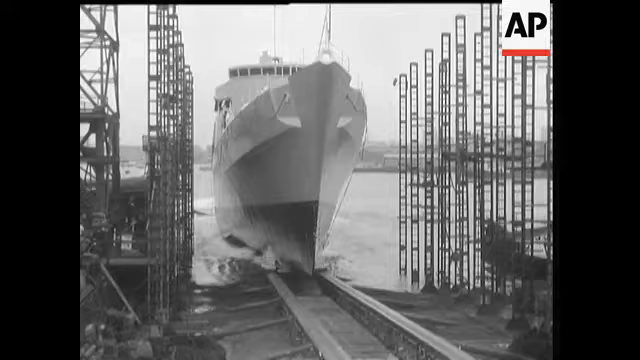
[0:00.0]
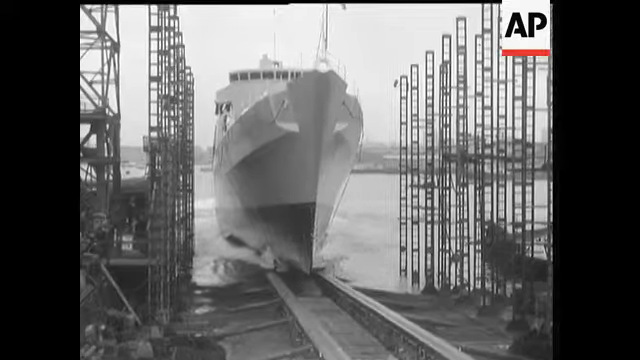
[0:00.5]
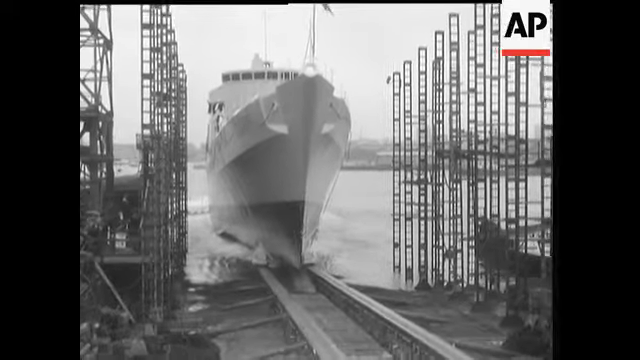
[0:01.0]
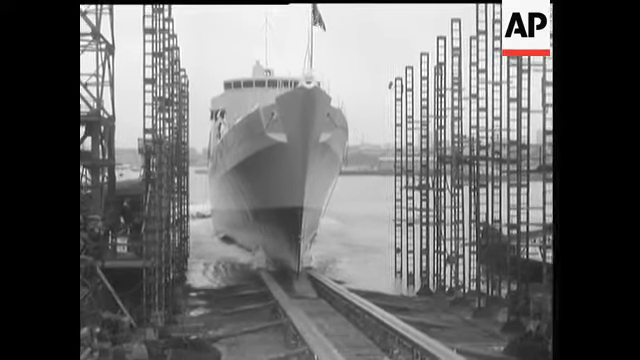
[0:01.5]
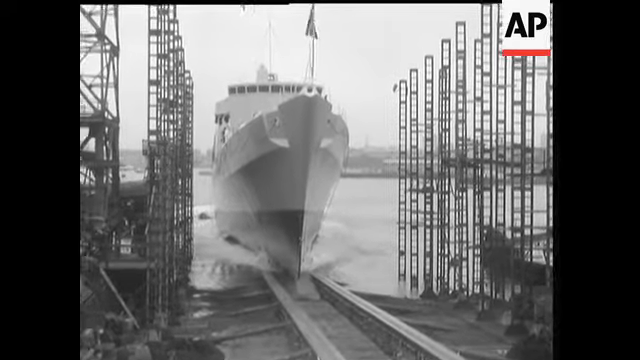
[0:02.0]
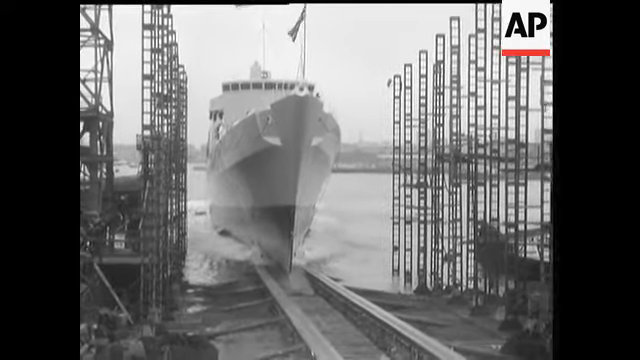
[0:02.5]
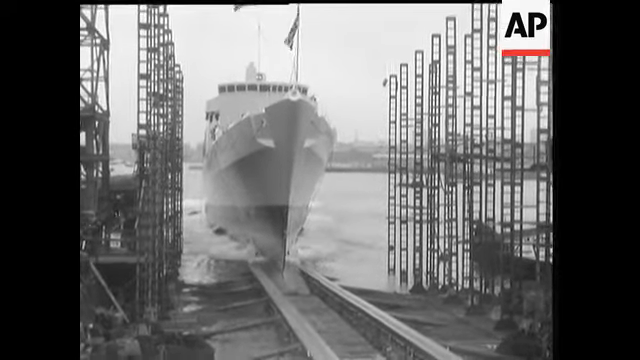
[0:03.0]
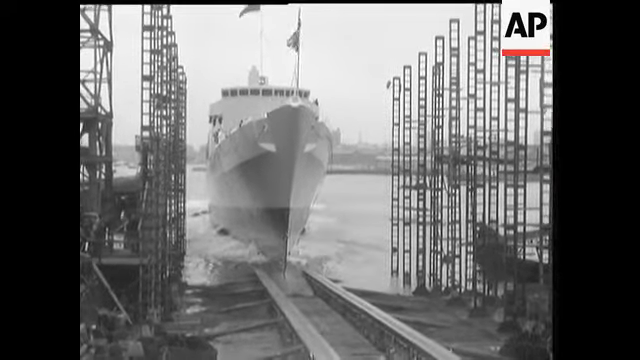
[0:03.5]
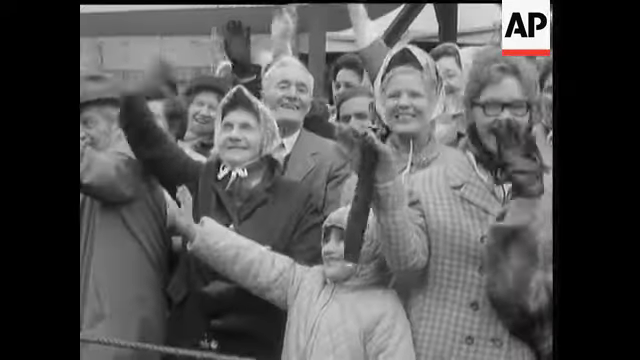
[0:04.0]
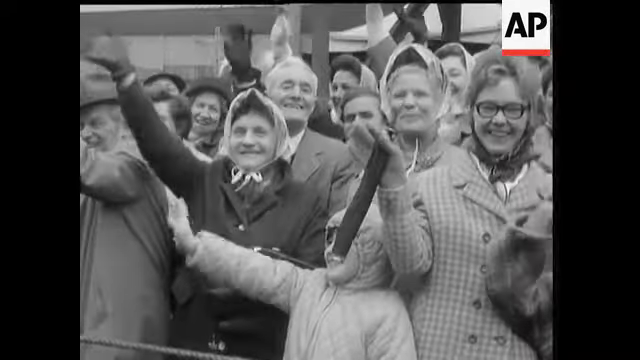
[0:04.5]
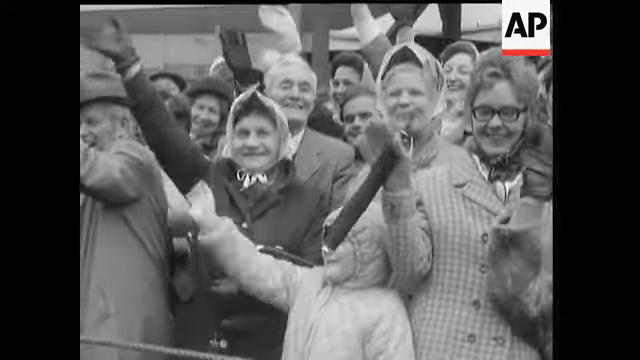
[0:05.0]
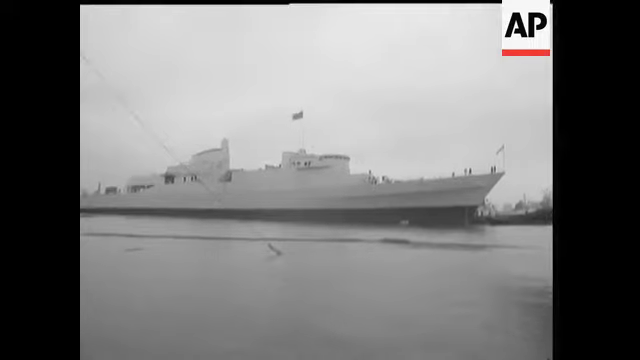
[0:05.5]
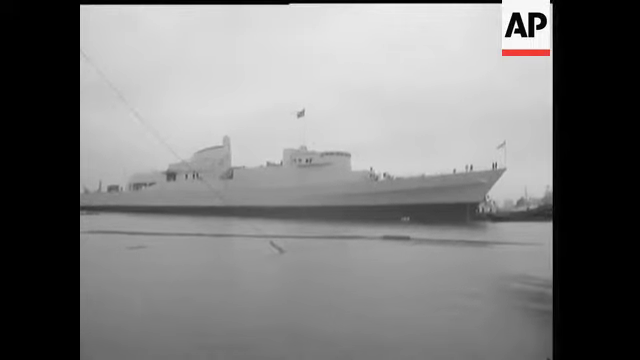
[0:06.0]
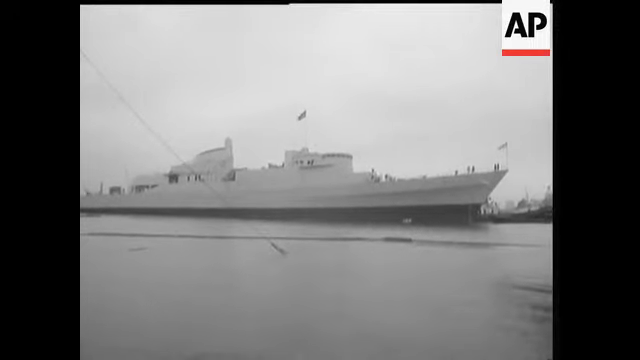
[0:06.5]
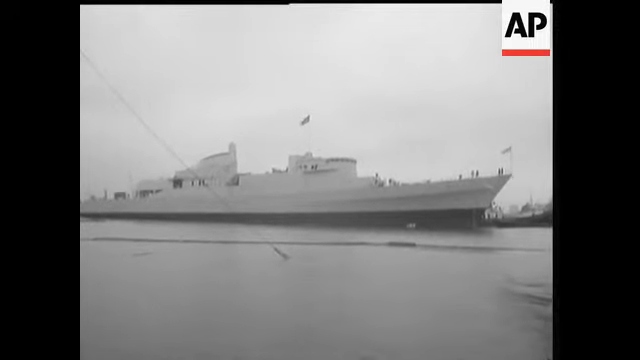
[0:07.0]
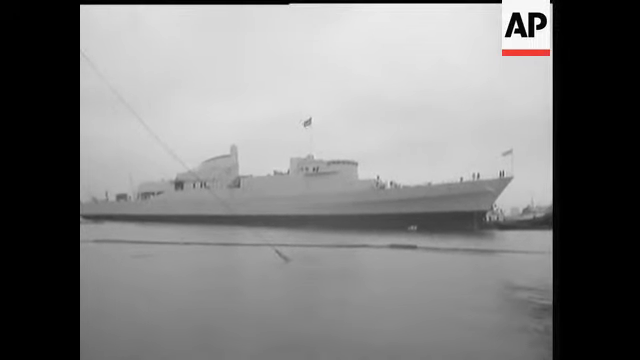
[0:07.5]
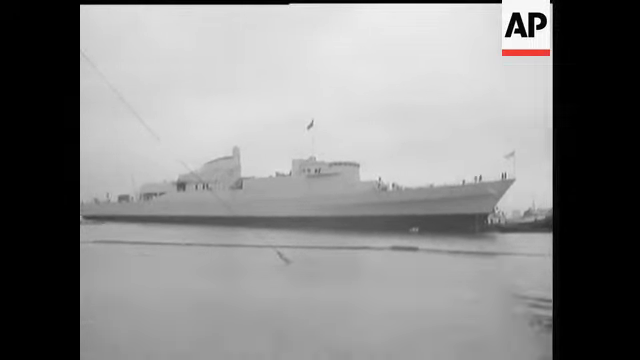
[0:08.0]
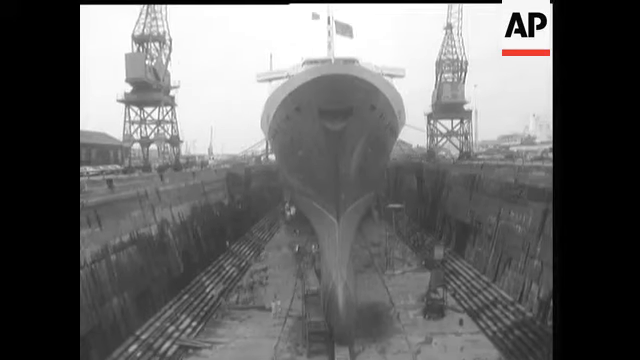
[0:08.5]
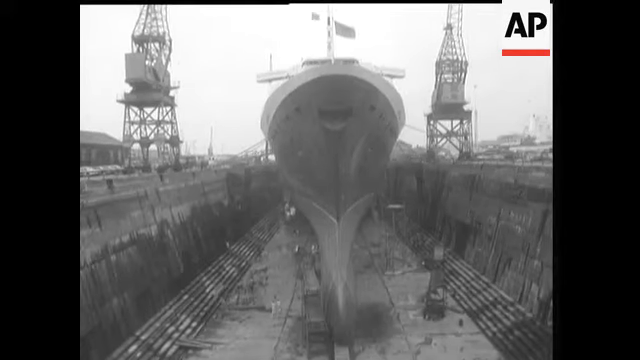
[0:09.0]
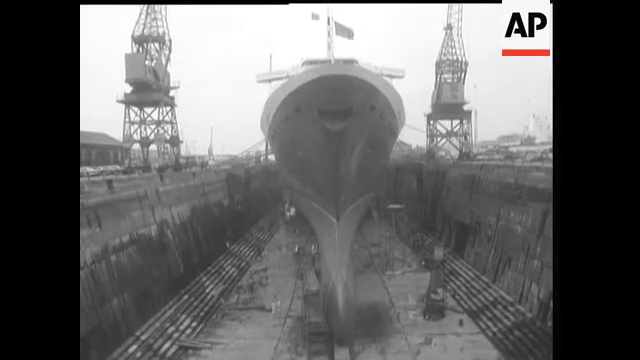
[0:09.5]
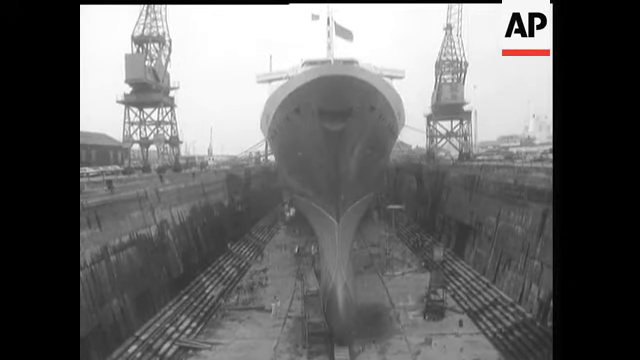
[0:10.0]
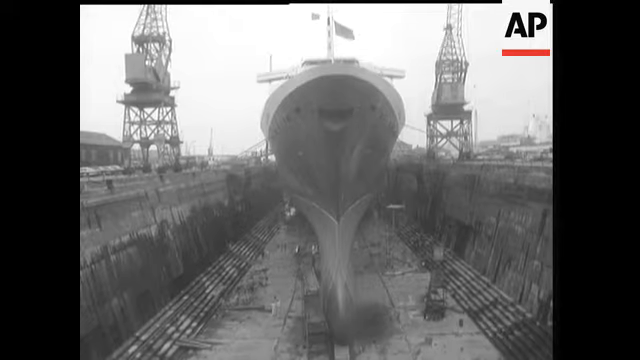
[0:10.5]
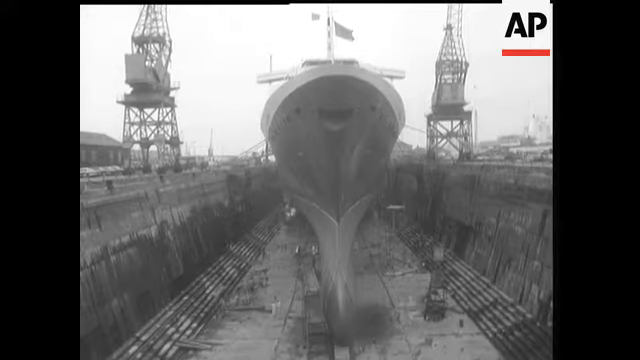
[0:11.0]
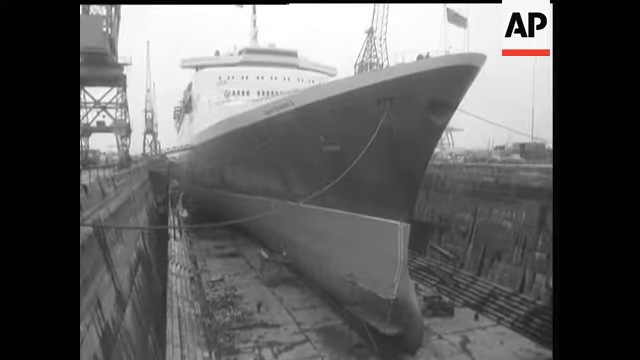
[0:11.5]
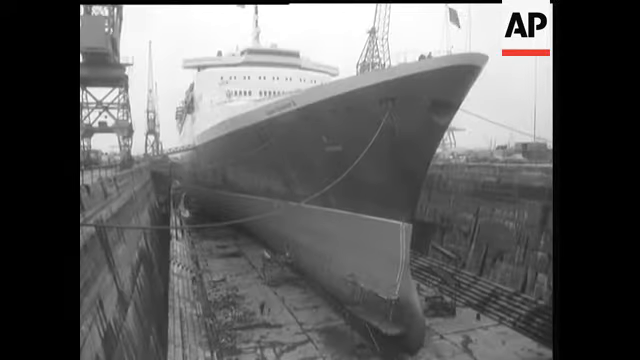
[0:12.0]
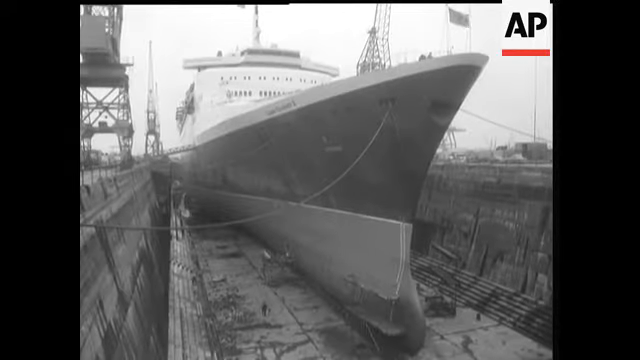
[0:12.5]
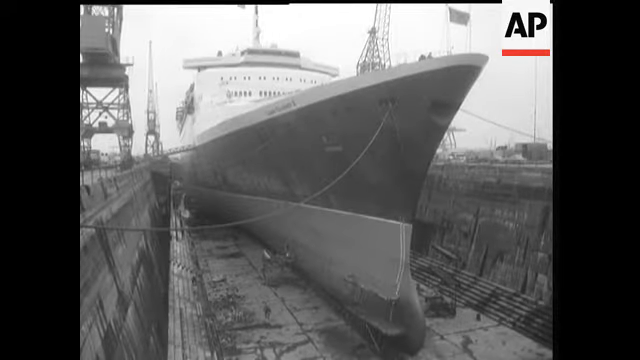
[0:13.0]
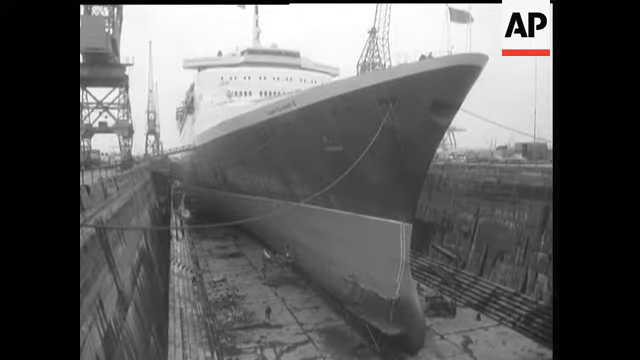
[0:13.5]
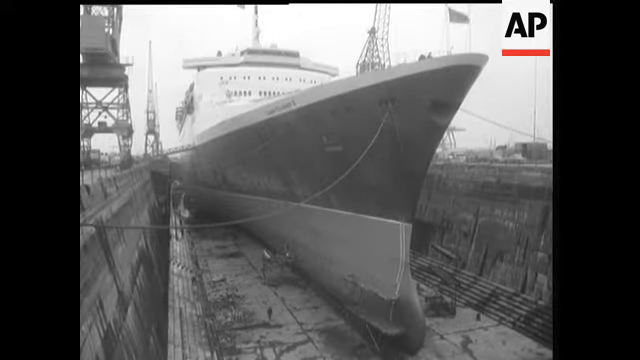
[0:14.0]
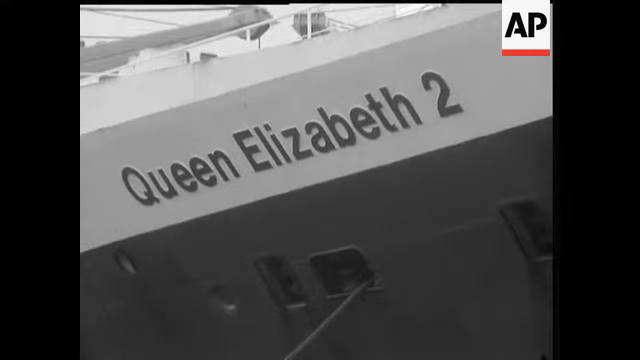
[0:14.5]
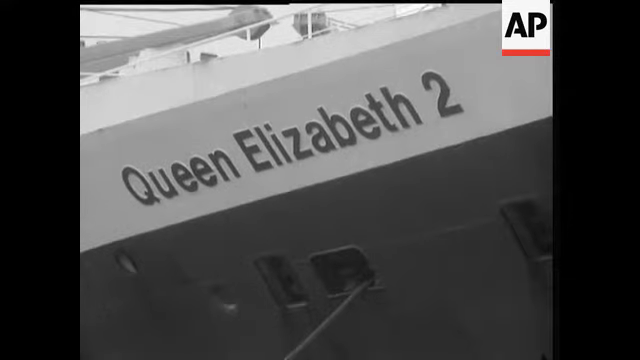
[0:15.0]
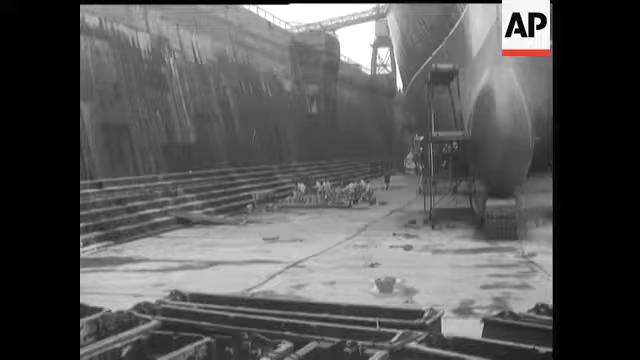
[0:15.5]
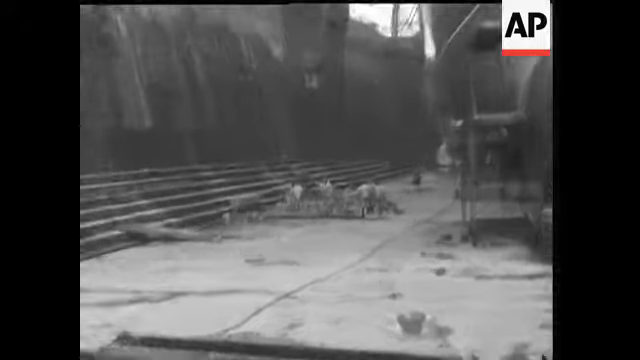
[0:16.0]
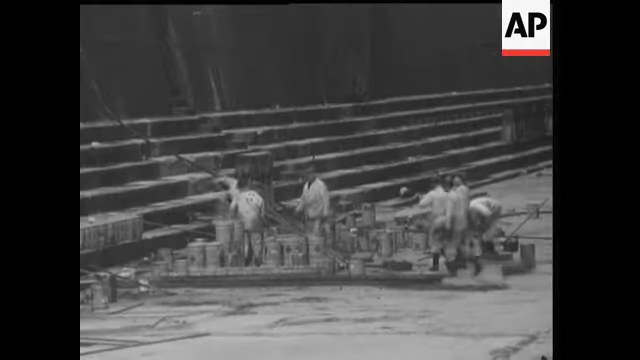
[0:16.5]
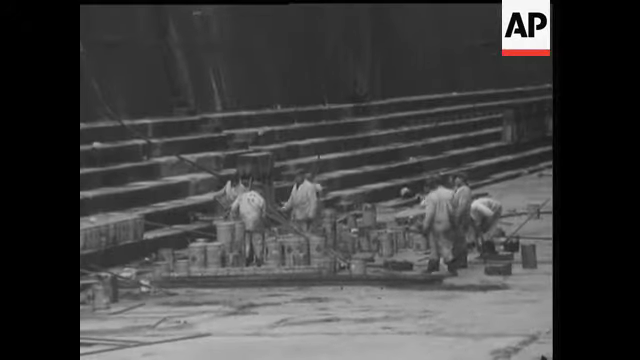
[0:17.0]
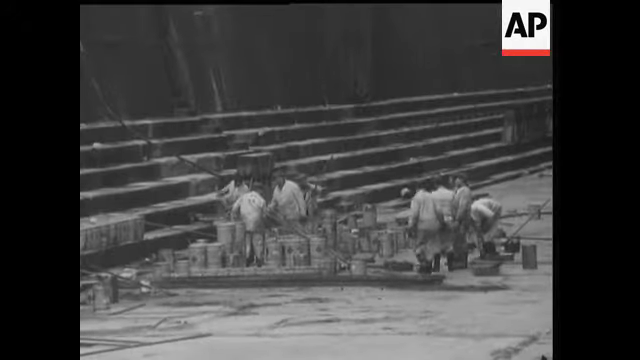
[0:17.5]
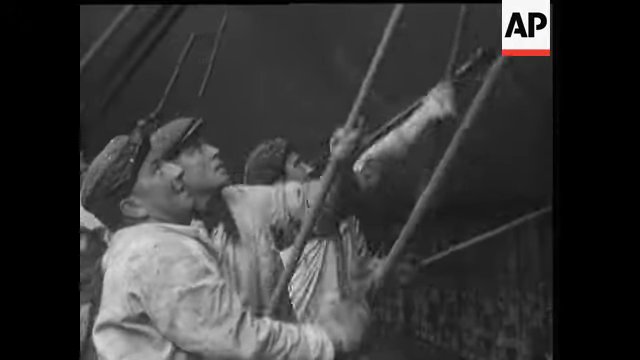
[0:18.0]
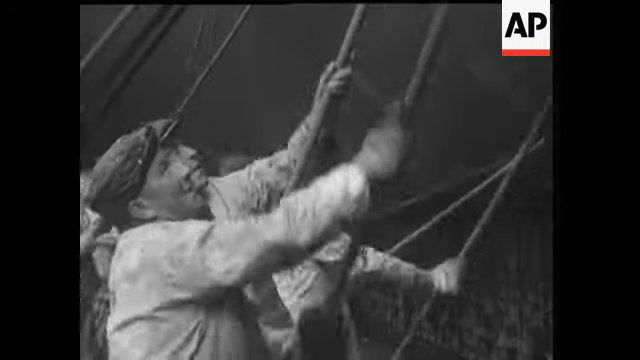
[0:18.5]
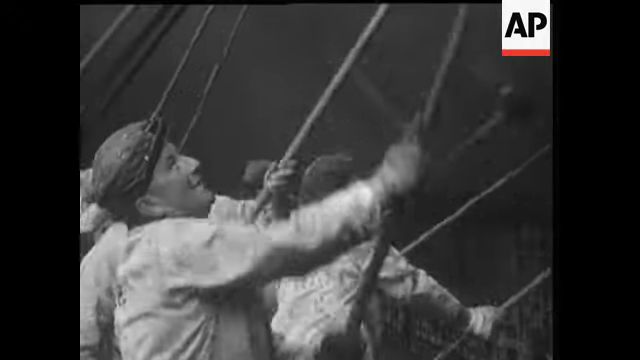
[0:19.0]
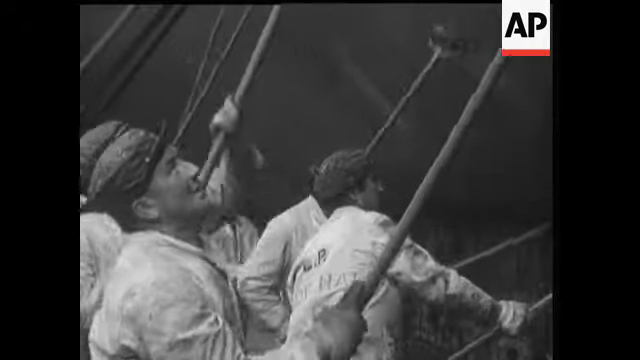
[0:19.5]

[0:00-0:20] In a grainy black-and-white video with an AP logo in the top right-hand corner, a shipyard scene shows the launching of the QE-2, a very large and very old cruise ship. Two rails run through the middle of the image, and the ship slides along them into the water, which is visible at the bottom and is disturbed by the ship entering it. On either side of the rails are structures, probably used by the shipbuilders to access the ship while building it. A bunch of people wave the ship off.